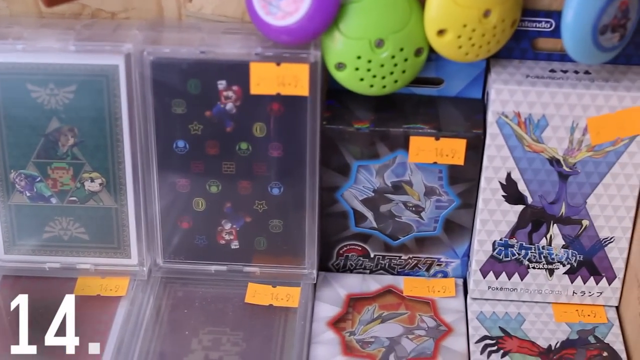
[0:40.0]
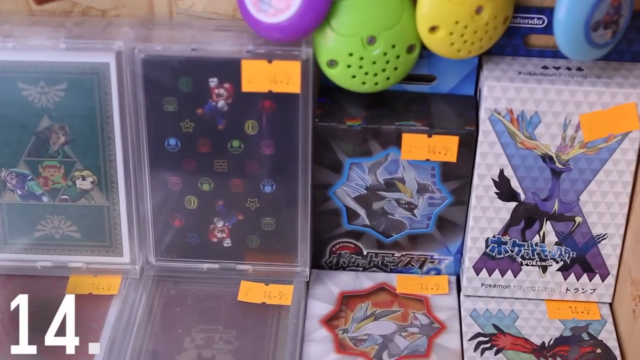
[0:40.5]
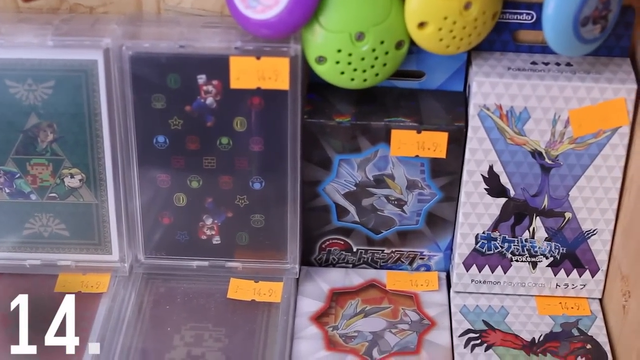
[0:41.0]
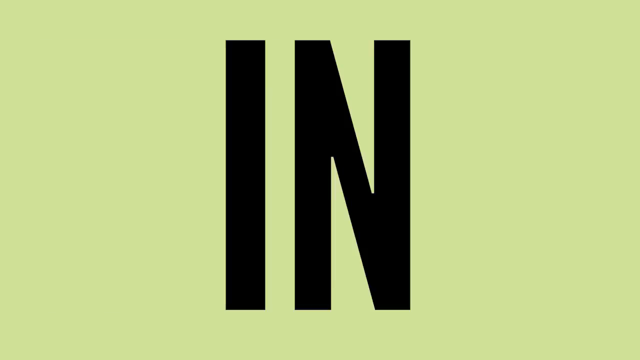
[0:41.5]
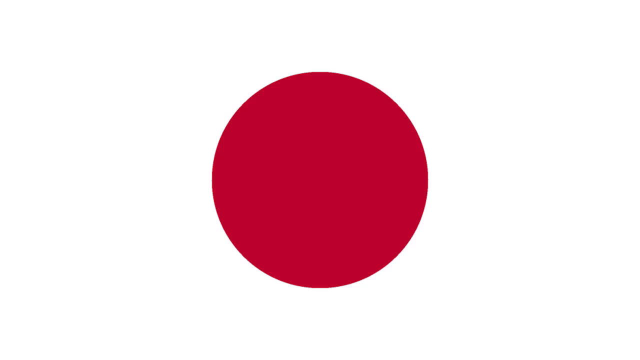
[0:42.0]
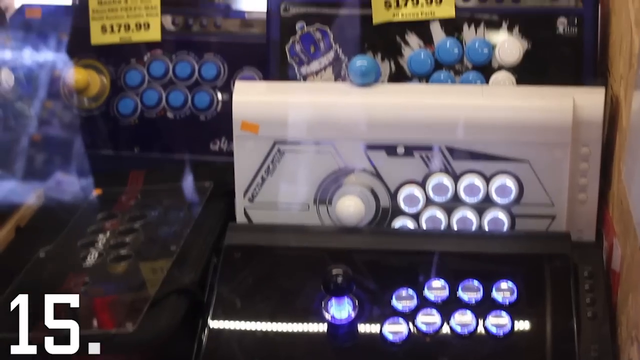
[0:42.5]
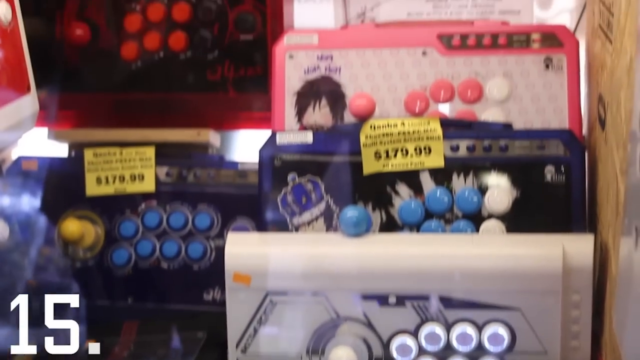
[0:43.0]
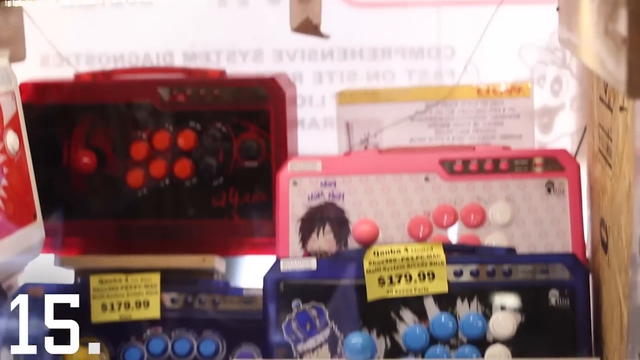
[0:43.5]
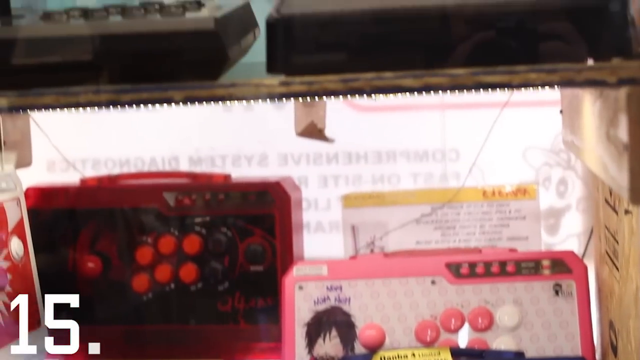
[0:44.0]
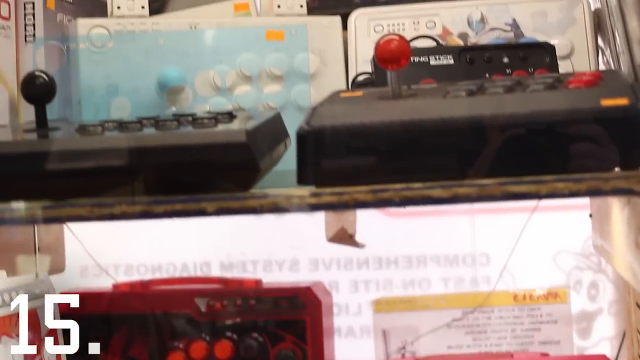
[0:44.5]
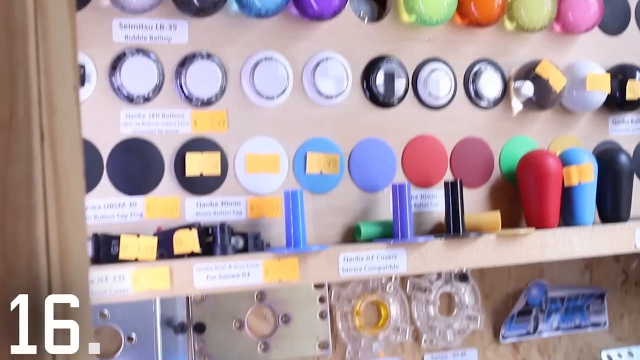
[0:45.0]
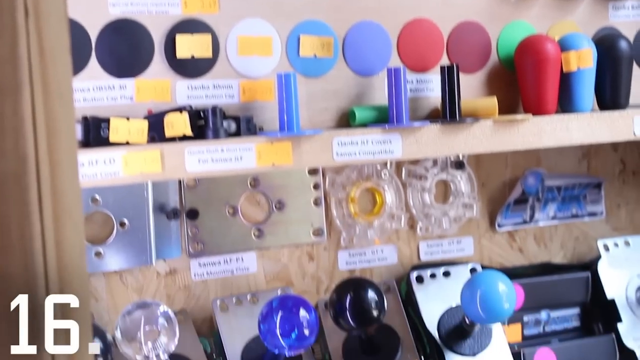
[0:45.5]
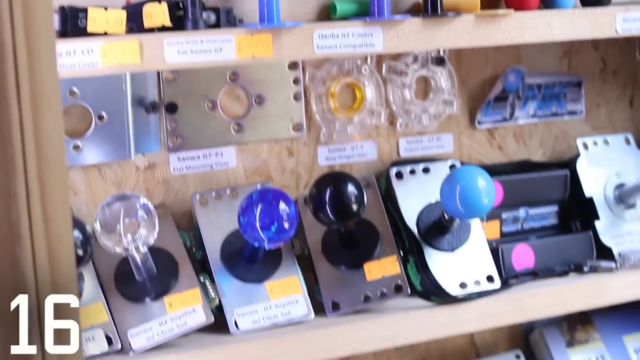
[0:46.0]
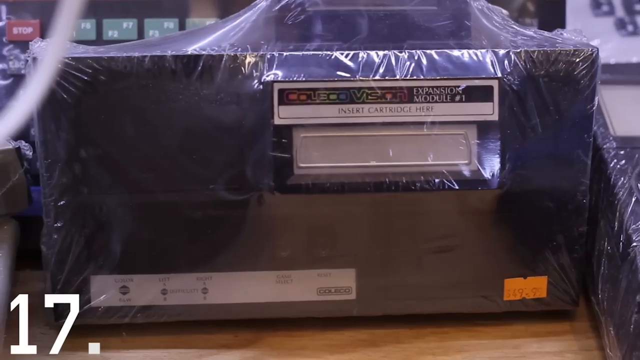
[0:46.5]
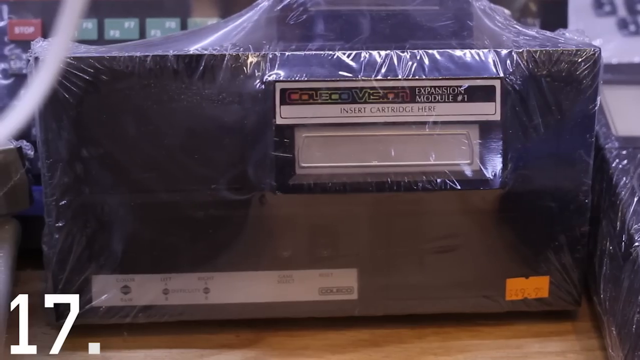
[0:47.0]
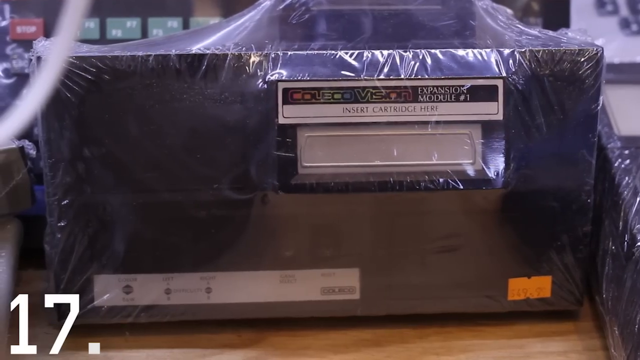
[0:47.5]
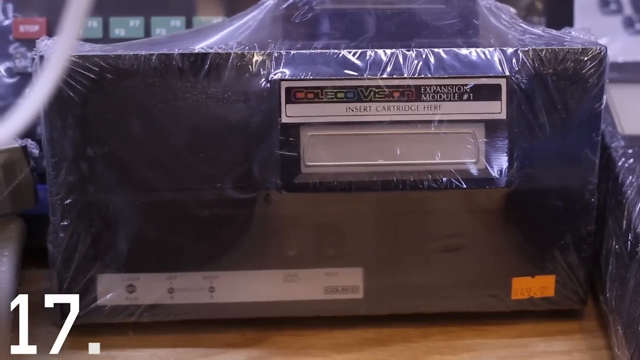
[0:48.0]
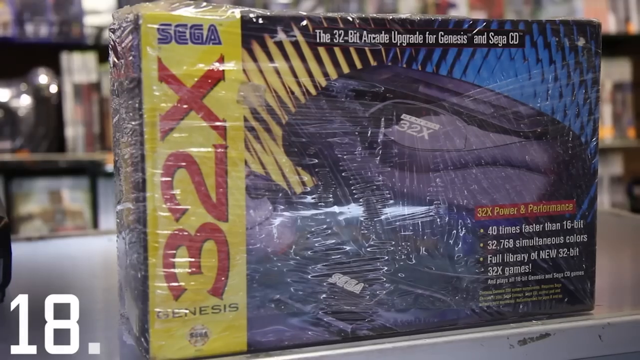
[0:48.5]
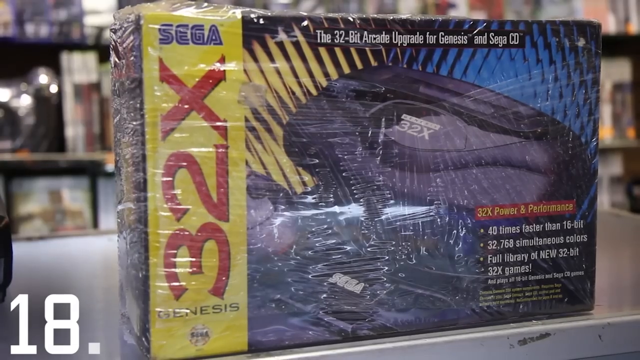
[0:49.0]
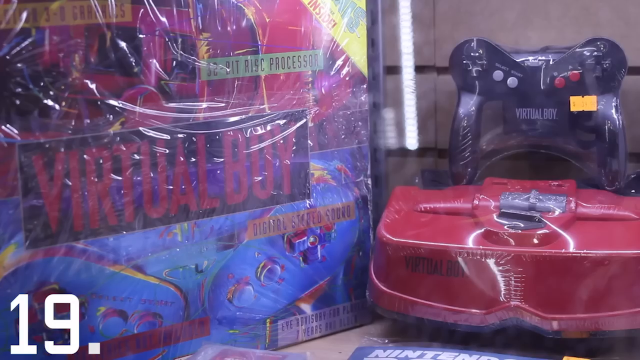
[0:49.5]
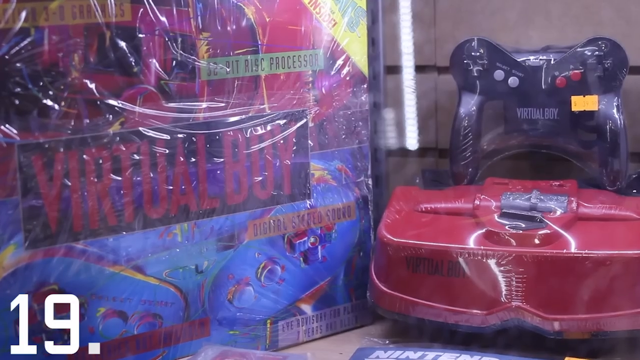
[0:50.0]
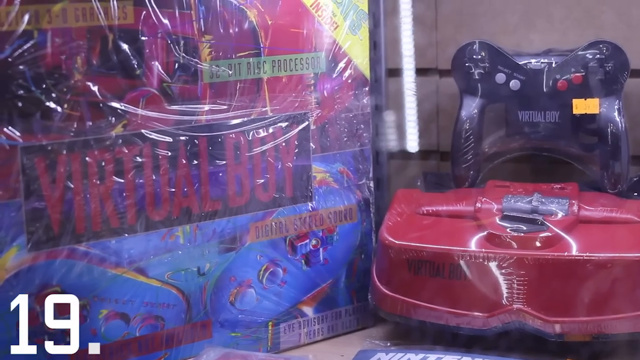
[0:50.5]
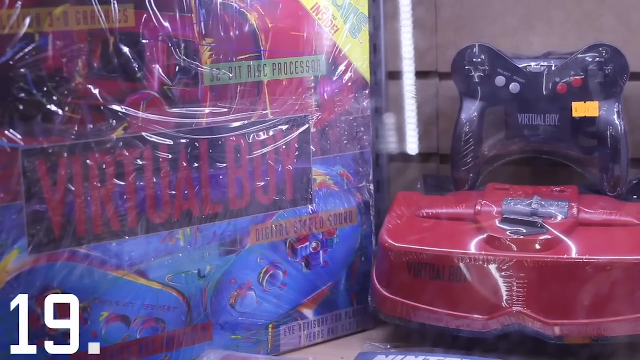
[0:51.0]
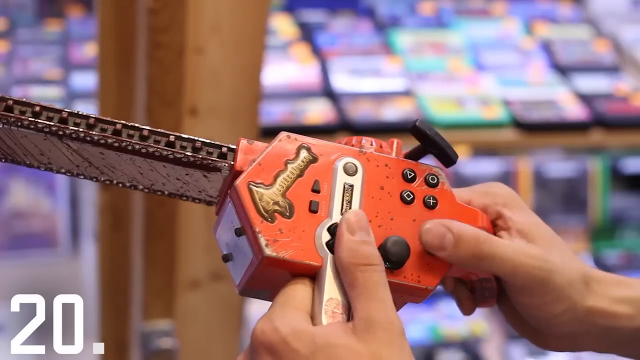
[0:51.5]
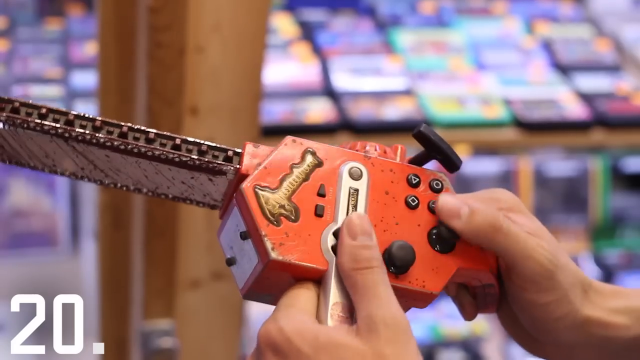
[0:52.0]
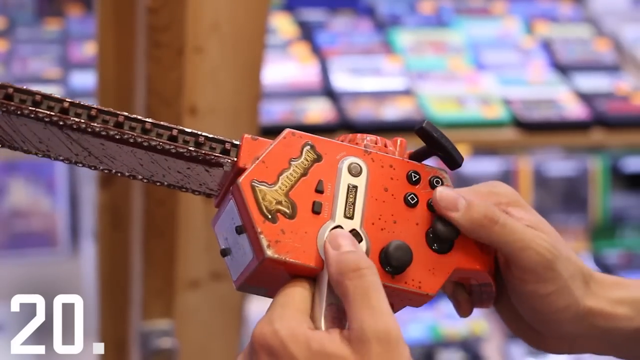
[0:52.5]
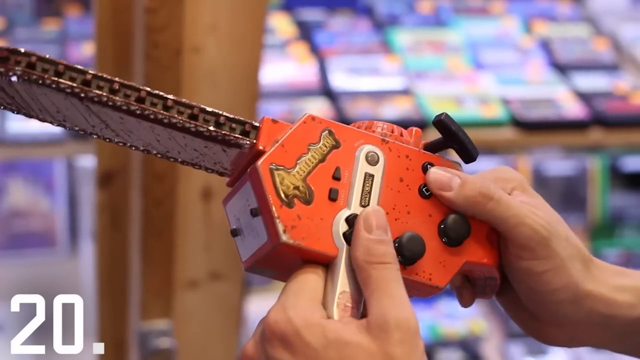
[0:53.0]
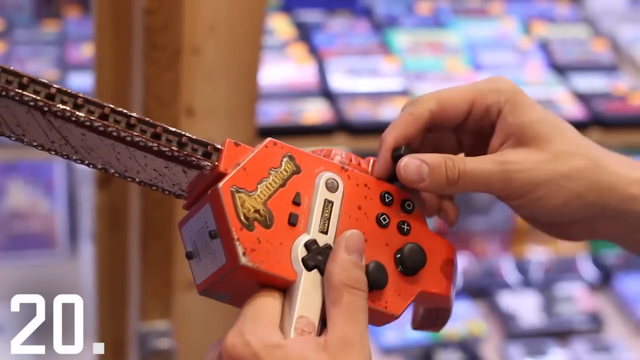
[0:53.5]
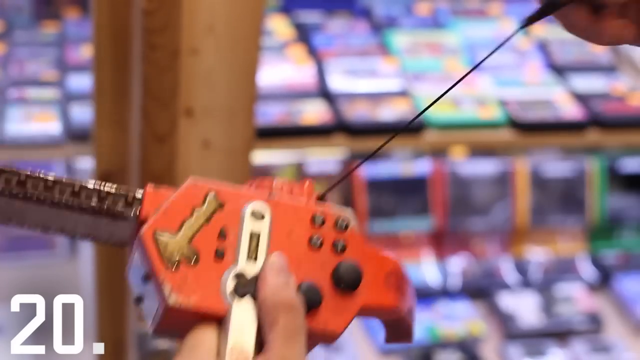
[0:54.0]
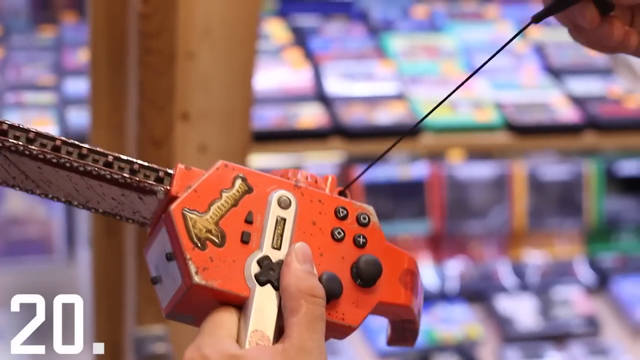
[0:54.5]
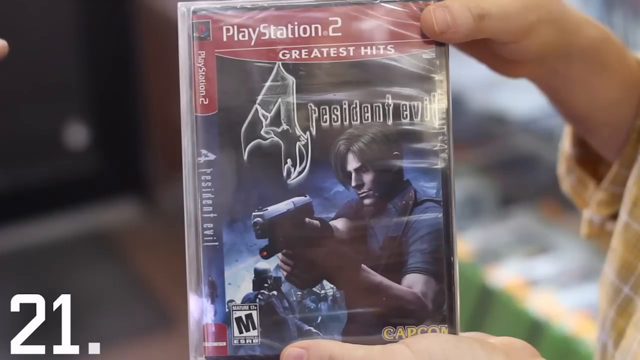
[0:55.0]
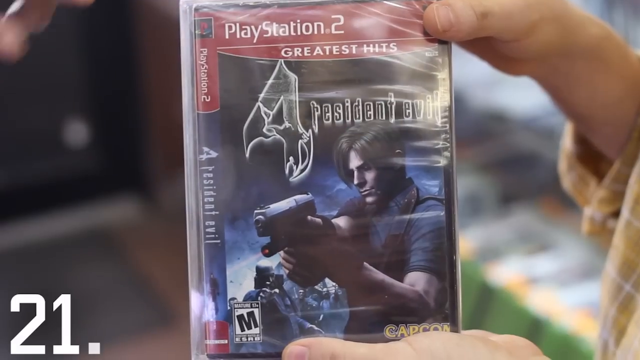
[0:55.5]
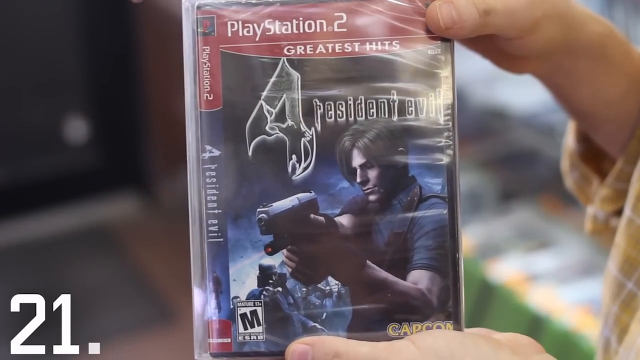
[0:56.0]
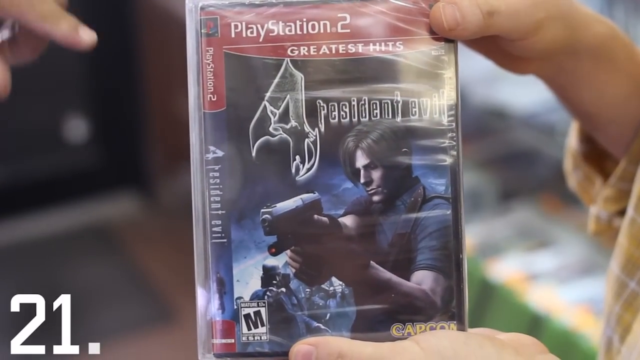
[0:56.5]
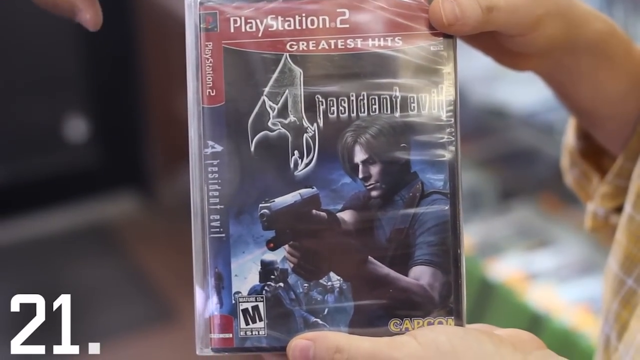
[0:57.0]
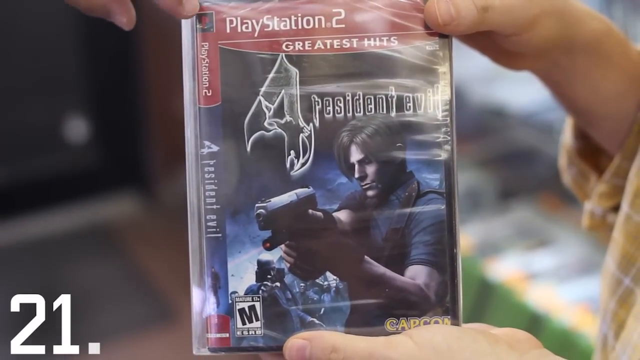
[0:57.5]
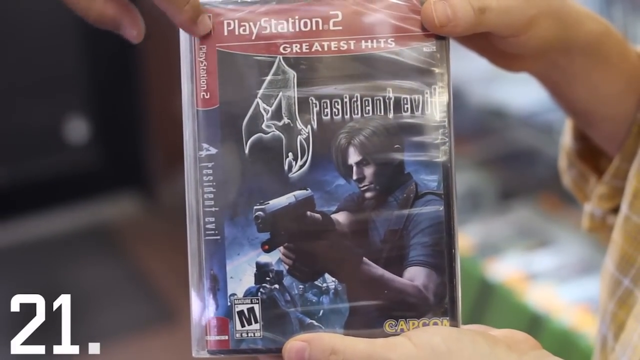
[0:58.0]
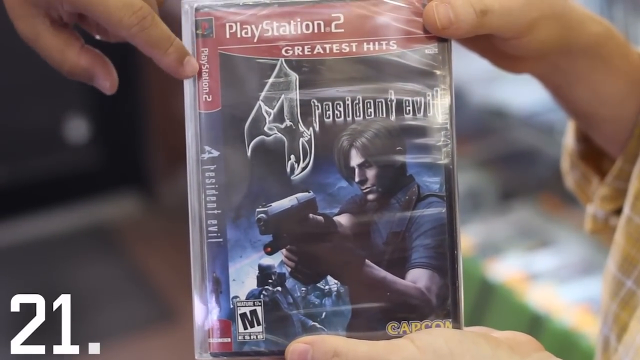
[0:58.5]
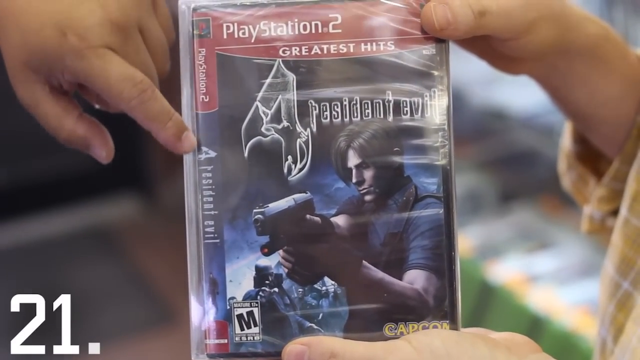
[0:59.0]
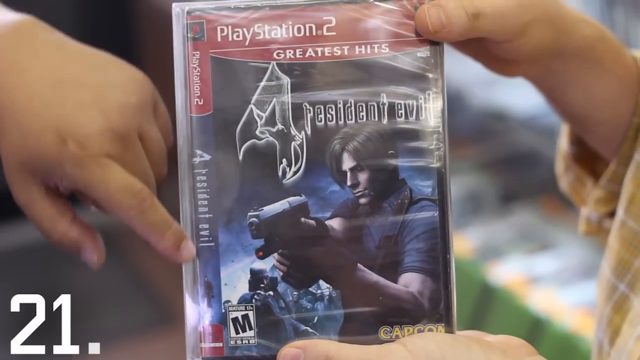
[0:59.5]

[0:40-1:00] What look like Pokémon video games or some kind of video game collectibles are shown, with Pokémon animals on the boxes and Japanese writing on them. Some controllers with different types of themes are shown for $179.99, followed by a ColecoVision expansion module wrapped in cellophane. The store has lots of stuff. A Sega CD32X is shown, then a Virtual Boy wrapped in cellophane with a controller wrapped in cellophane and another accessory wrapped in cellophane. Some kind of controller that looks like a chainsaw appears, then a Resident Evil 4 PlayStation 2 game wrapped in plastic. In the background all kinds of items are on a table, too blurry to make out. Another part of the video shows what looks like some kind of lights all in a row on the wall, in a bunch of different colors.